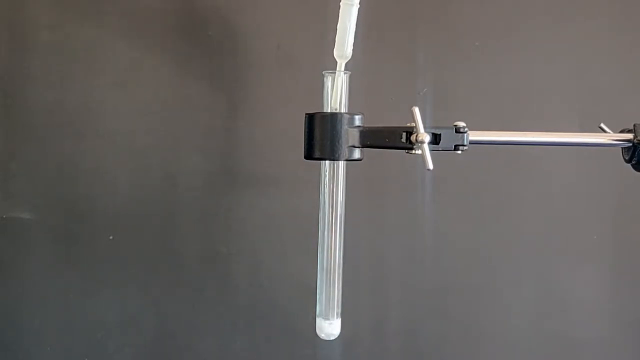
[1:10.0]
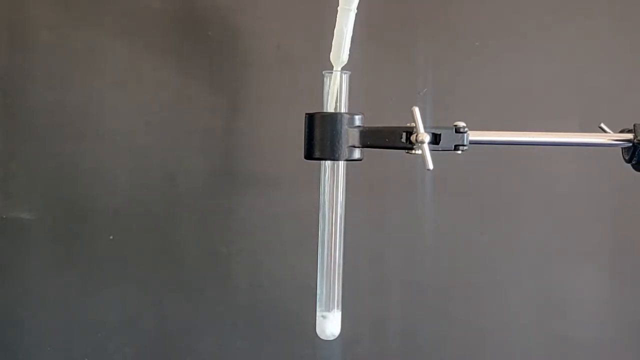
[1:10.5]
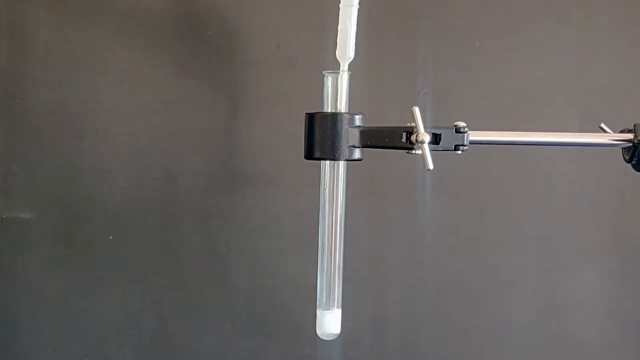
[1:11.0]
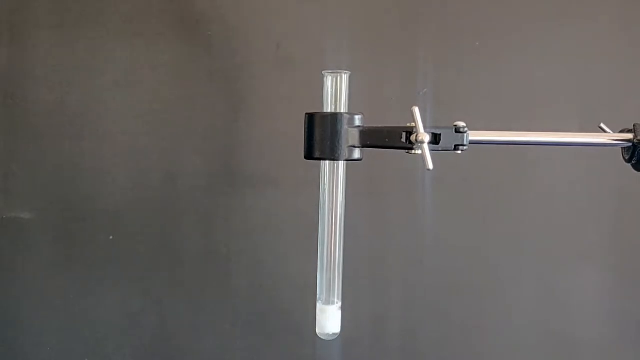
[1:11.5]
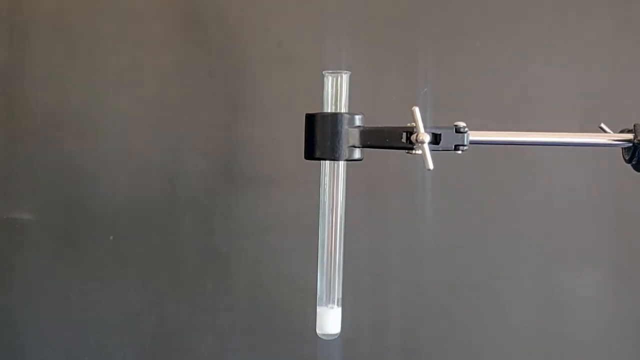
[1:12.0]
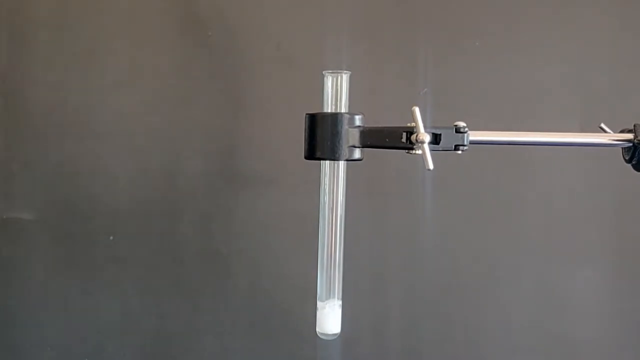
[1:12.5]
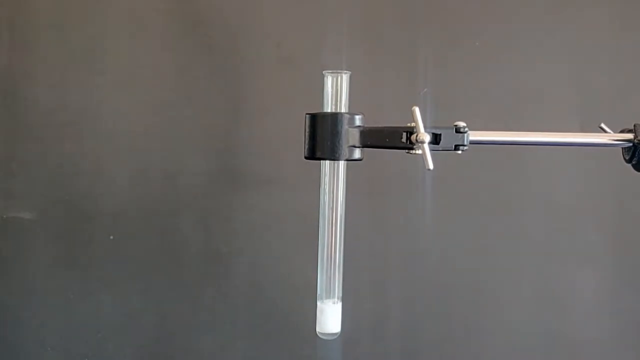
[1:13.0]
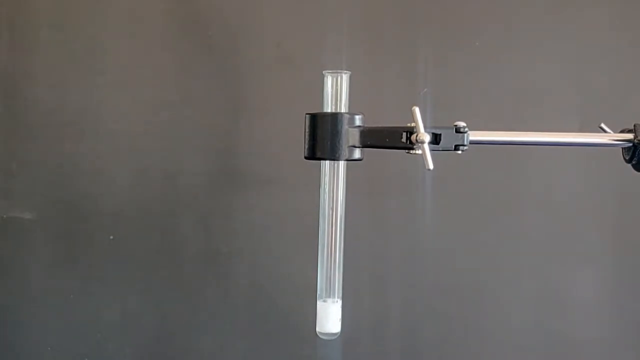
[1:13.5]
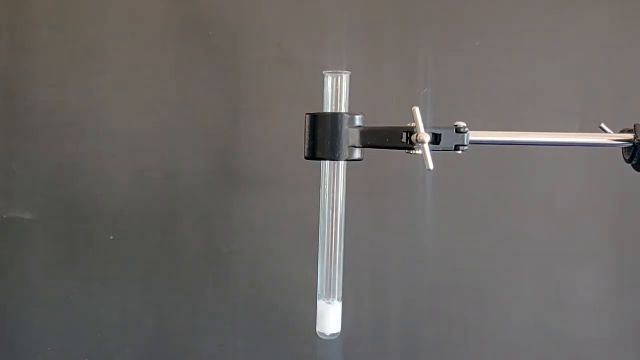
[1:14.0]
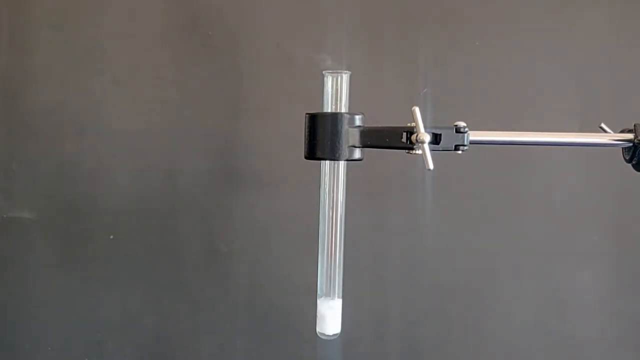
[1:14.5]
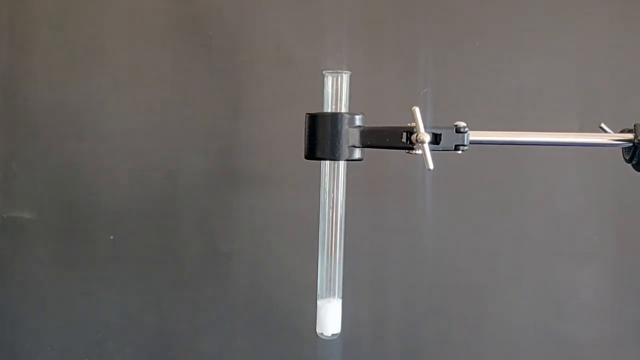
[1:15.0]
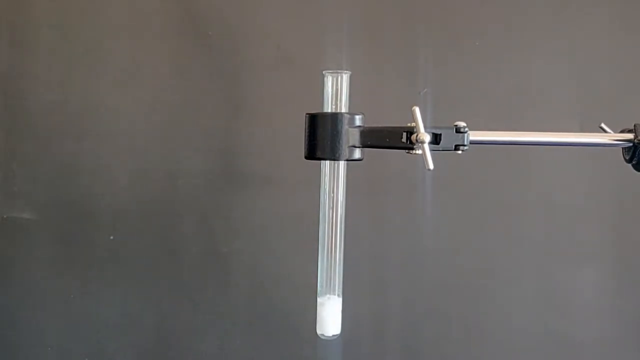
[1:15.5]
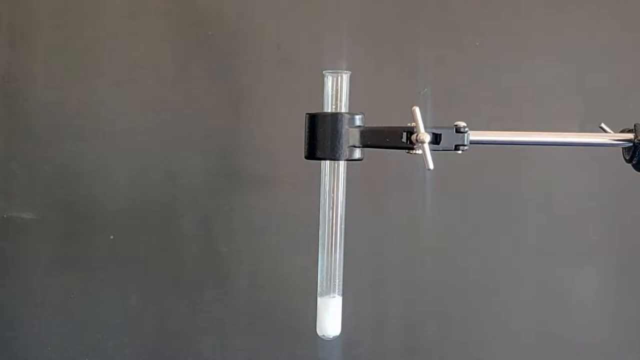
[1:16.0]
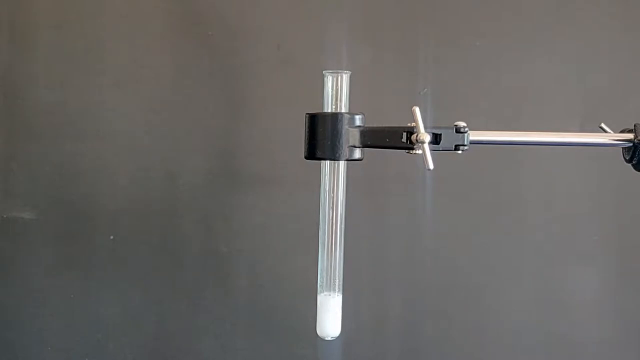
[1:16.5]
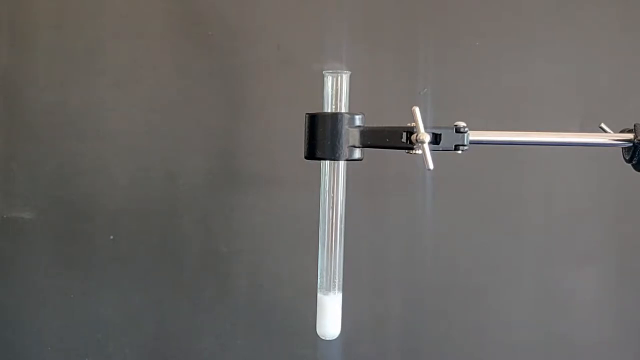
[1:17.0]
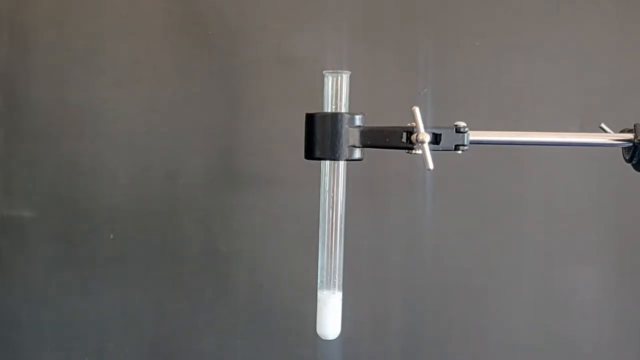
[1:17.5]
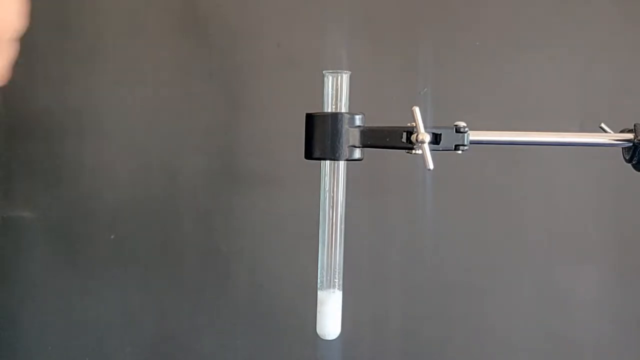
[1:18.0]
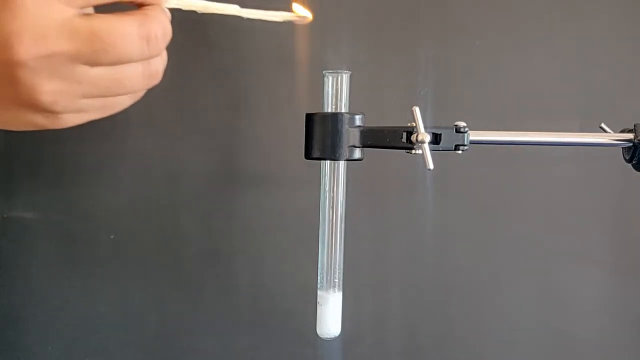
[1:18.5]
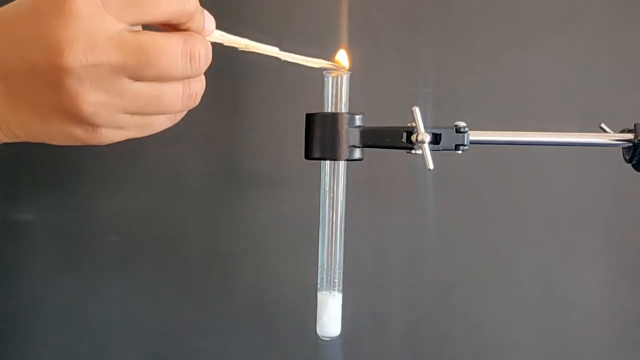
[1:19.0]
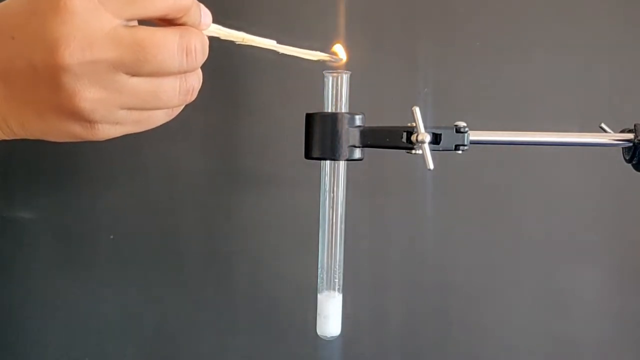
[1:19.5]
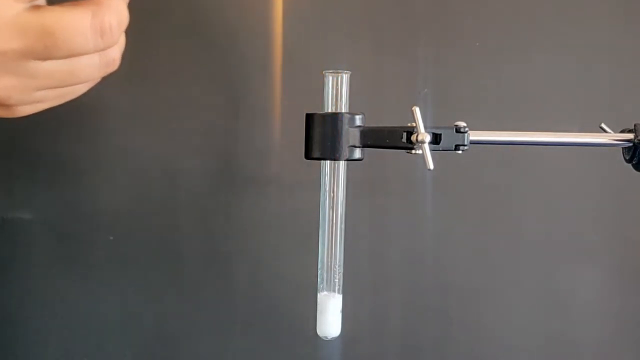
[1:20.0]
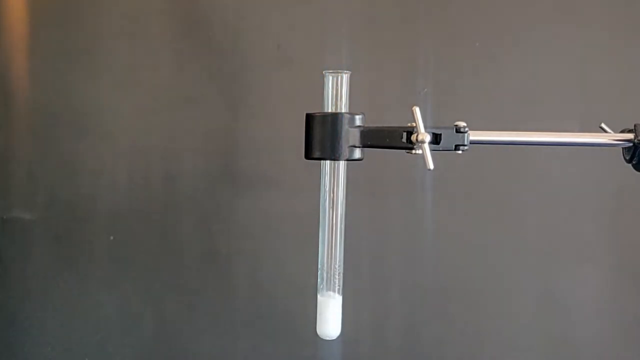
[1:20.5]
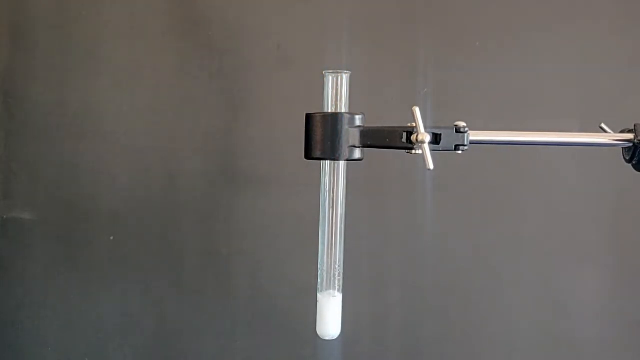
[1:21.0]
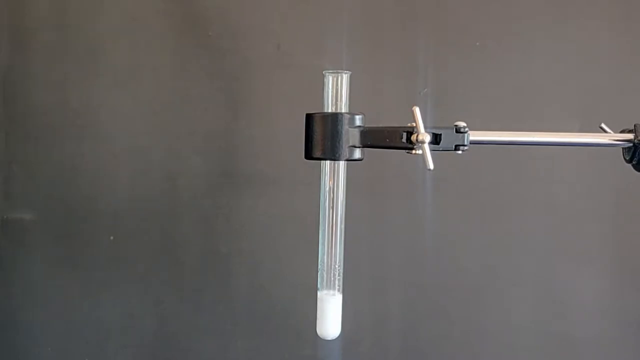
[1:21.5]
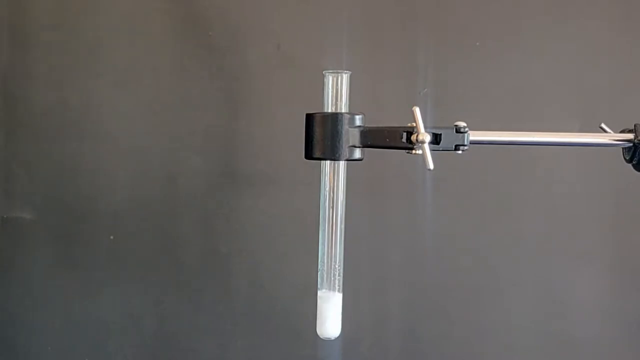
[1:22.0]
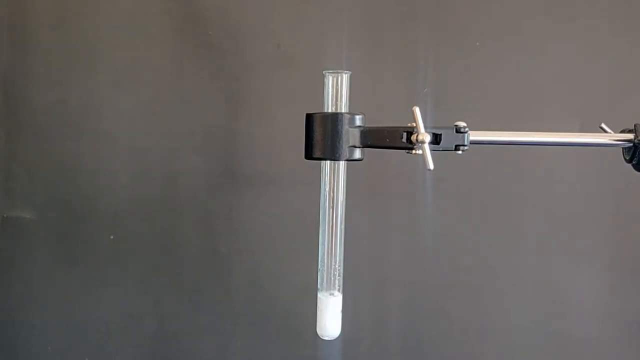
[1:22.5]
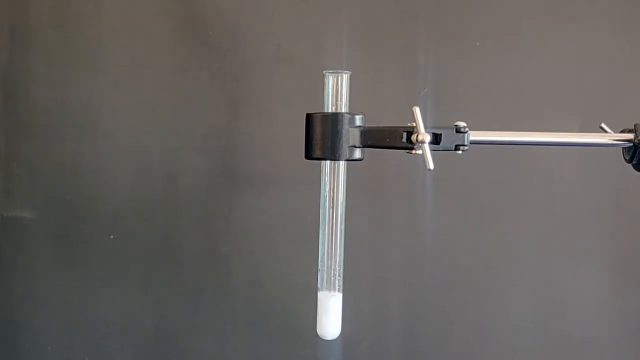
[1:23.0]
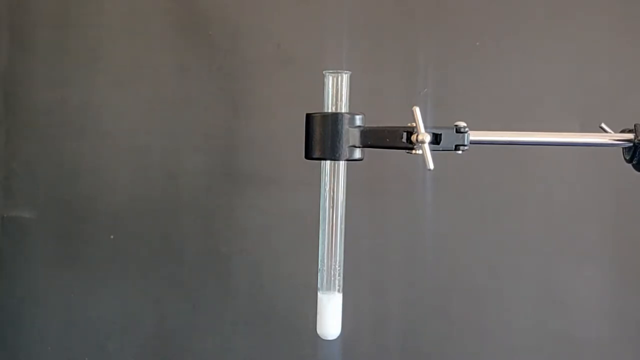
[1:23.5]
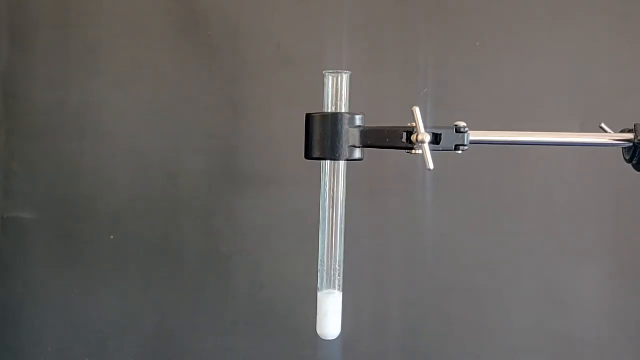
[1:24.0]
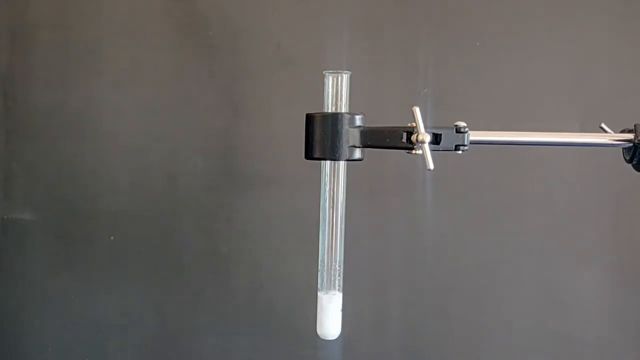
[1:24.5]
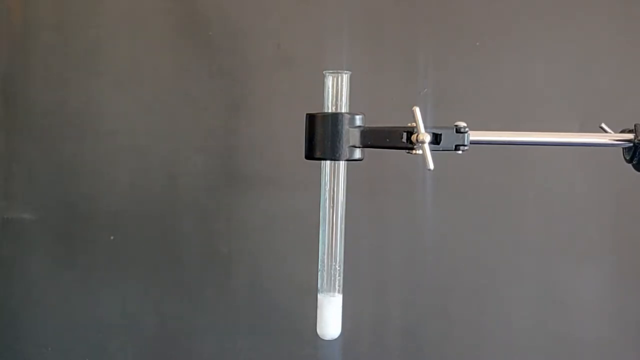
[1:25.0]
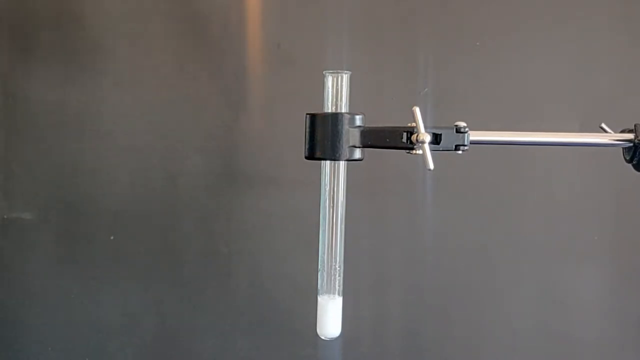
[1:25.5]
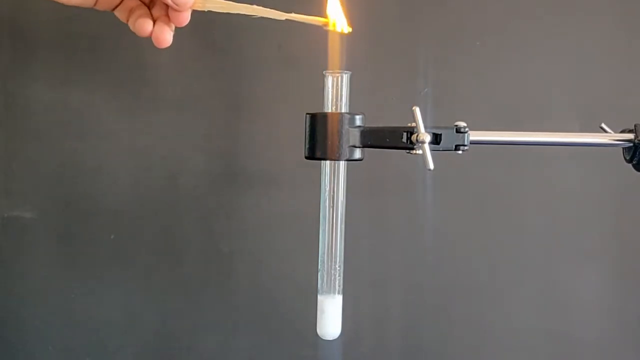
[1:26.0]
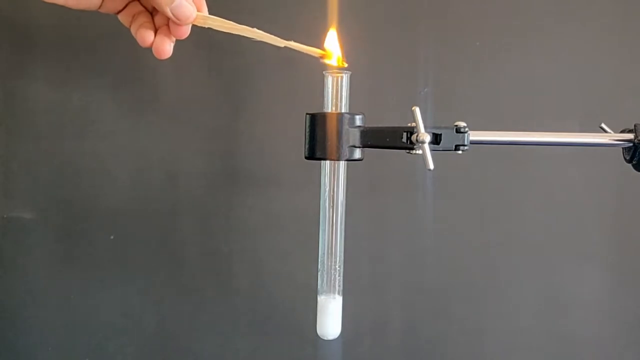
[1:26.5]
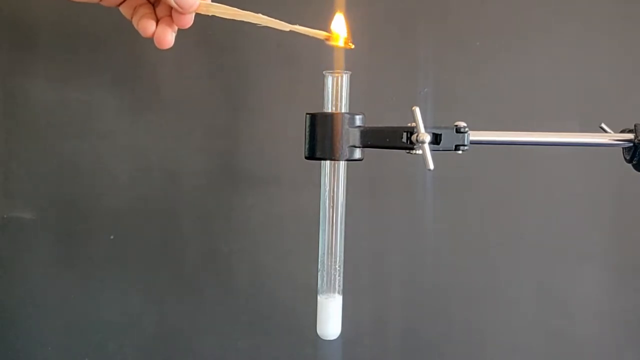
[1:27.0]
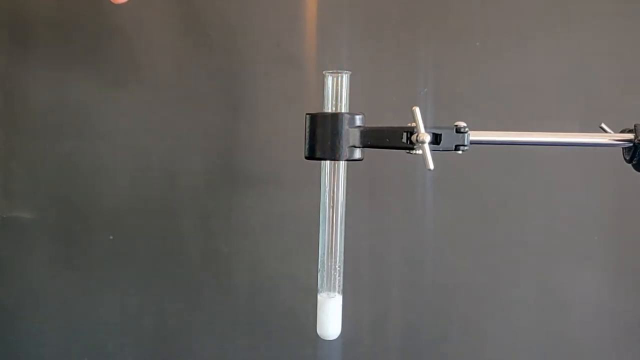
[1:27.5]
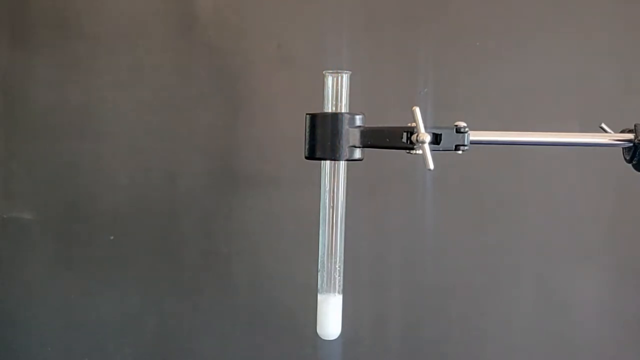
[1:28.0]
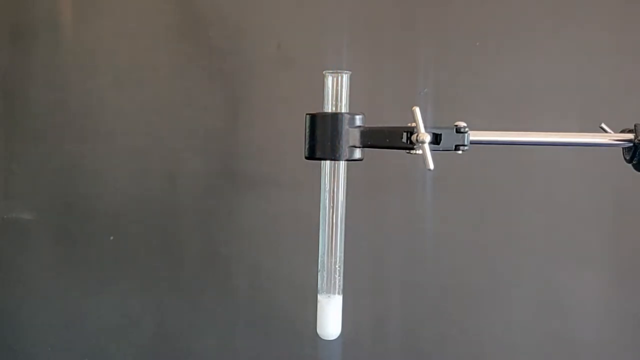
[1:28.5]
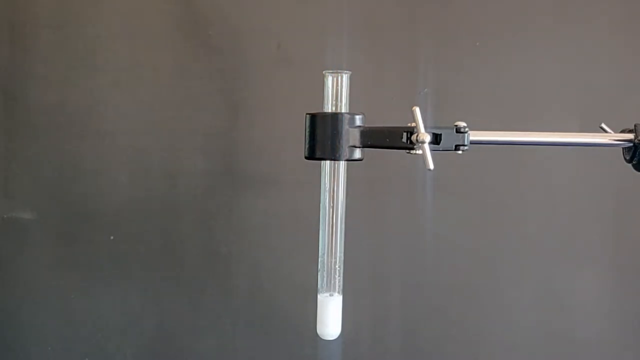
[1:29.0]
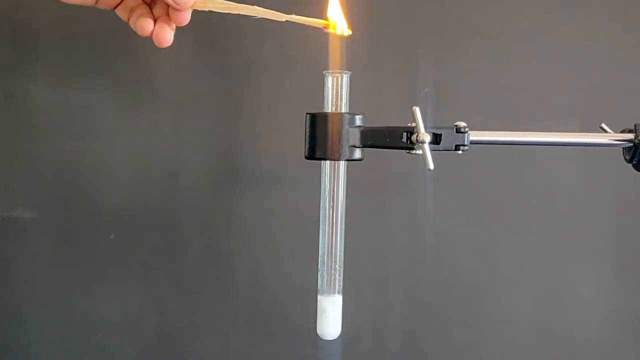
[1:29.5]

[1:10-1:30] A close-up shows a gray background and a test tube held by a metal mechanical arm with a black grip, hinges at three points and a tightening bar. A stainless steel bar extends from the black part toward the right. The end of a bulb dropper is inside the top of the test tube, dropping liquid that is visible at the bottom. A person's hand leaves the frame, the liquid at the bottom of the test tube is now bubbling, and gas is coming from the top of the test tube. The person's hand enters the frame with a lit matchstick and lights the top of the test tube; it doesn't appear to do anything.